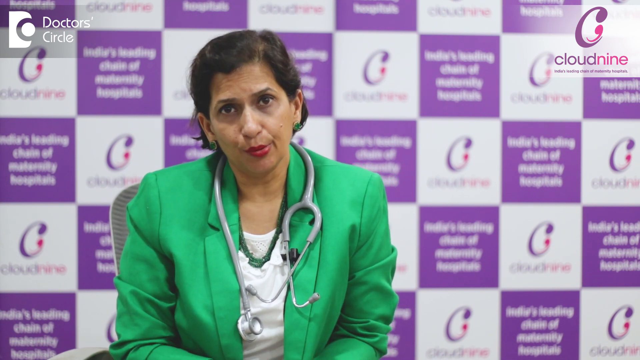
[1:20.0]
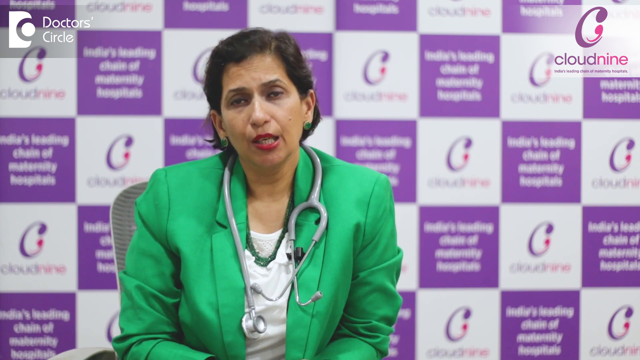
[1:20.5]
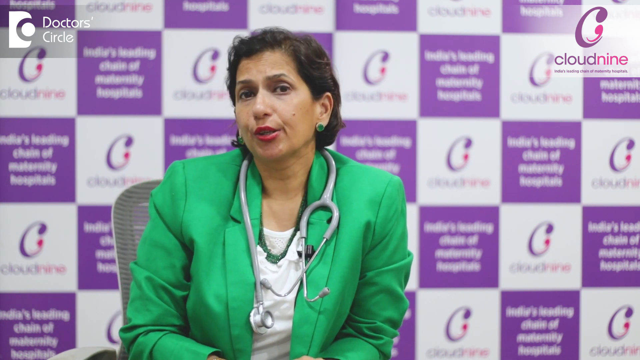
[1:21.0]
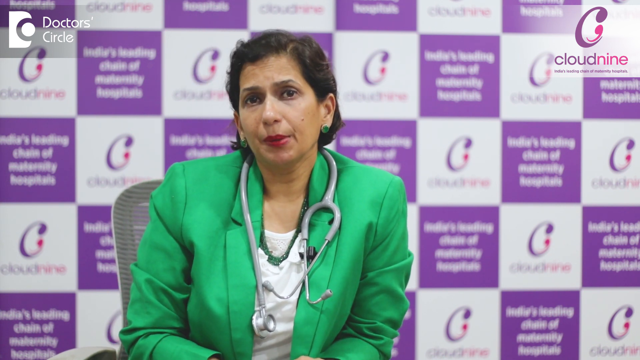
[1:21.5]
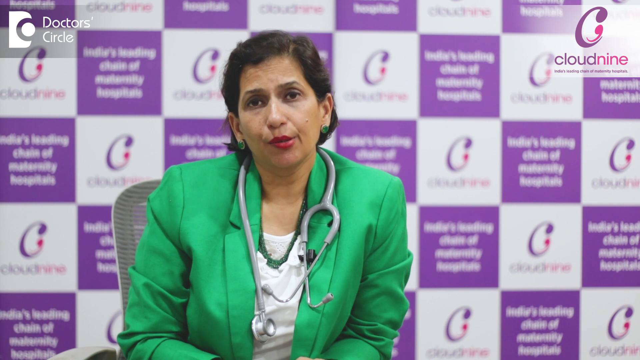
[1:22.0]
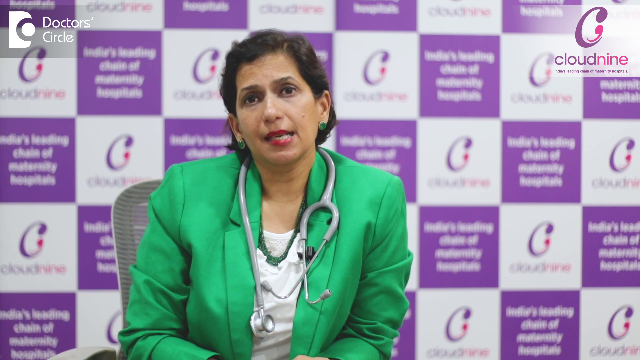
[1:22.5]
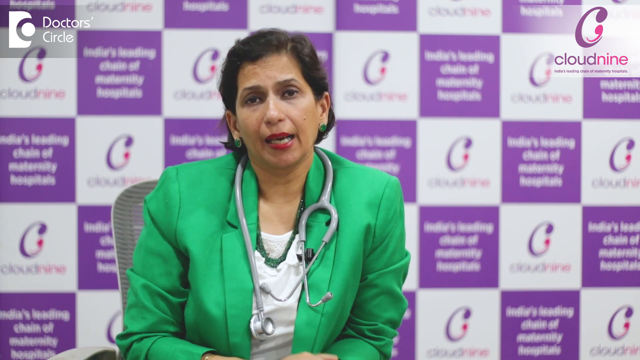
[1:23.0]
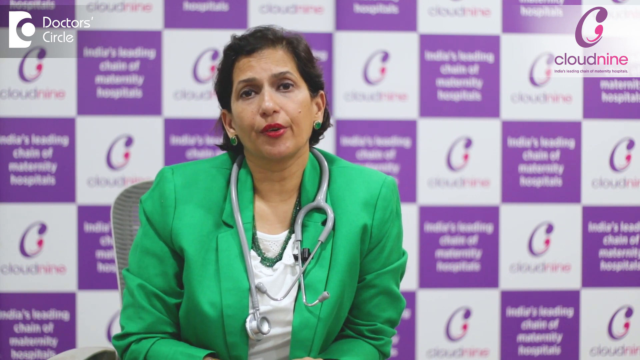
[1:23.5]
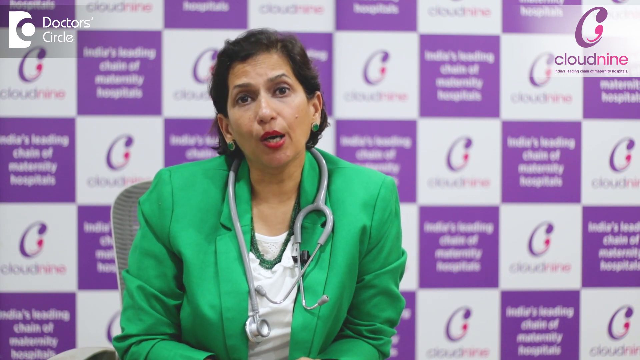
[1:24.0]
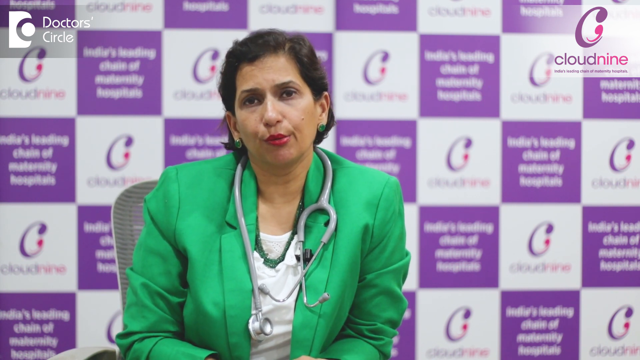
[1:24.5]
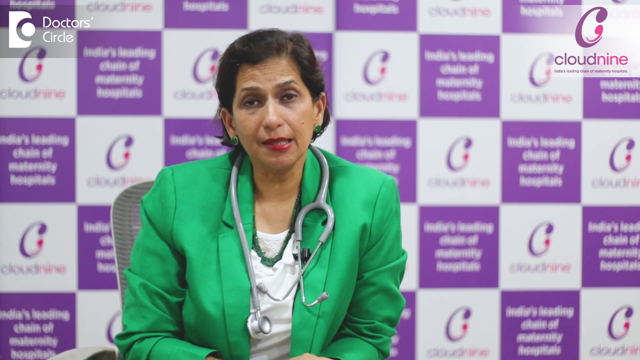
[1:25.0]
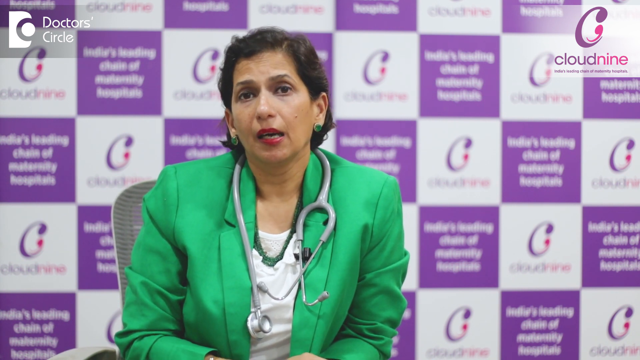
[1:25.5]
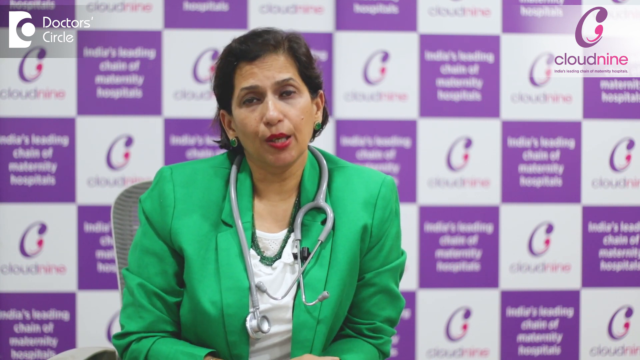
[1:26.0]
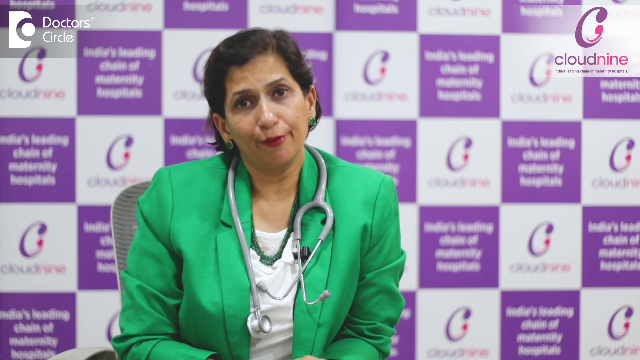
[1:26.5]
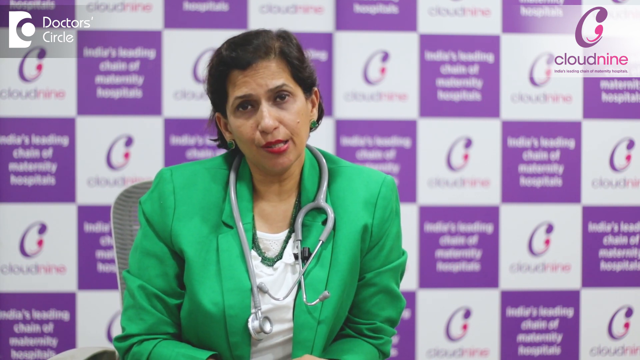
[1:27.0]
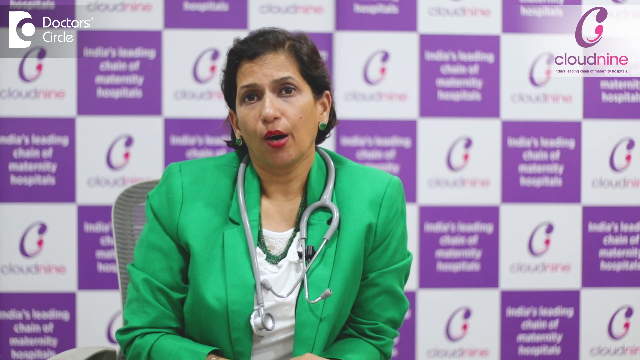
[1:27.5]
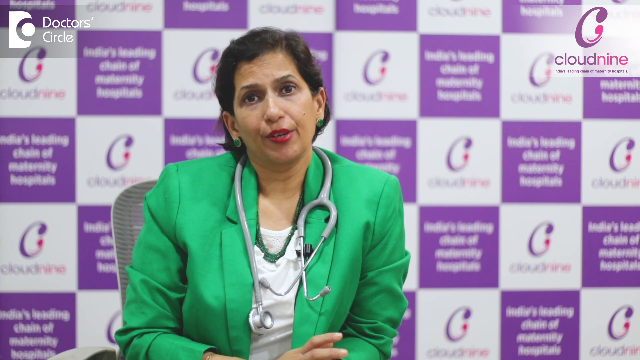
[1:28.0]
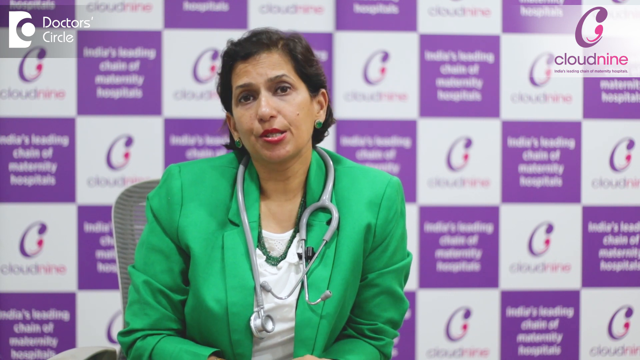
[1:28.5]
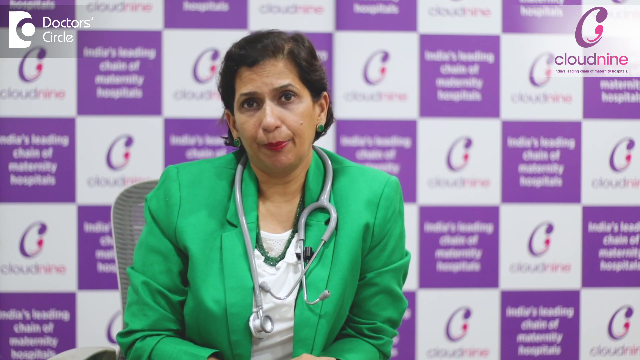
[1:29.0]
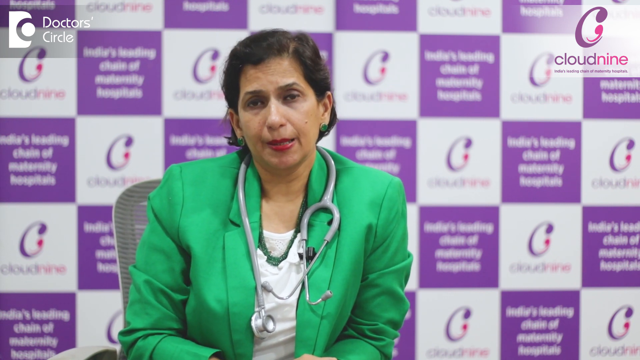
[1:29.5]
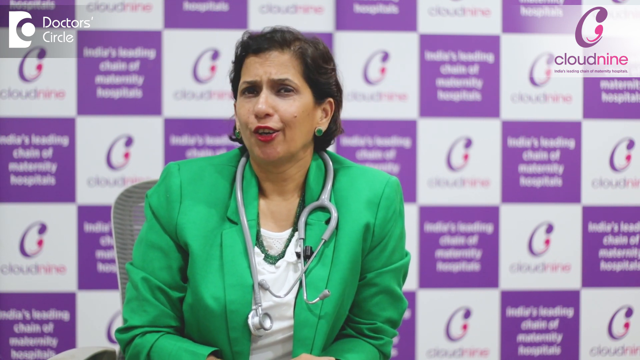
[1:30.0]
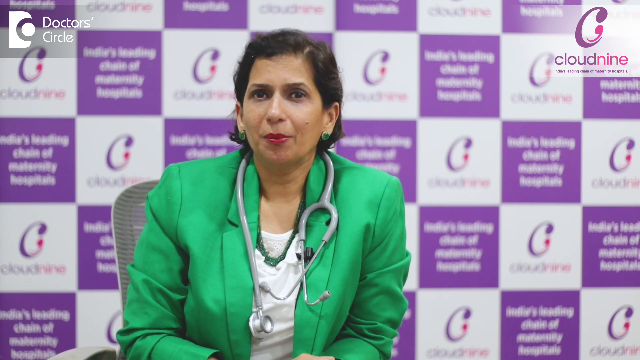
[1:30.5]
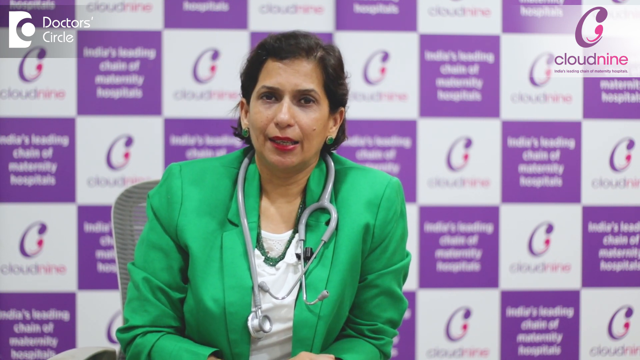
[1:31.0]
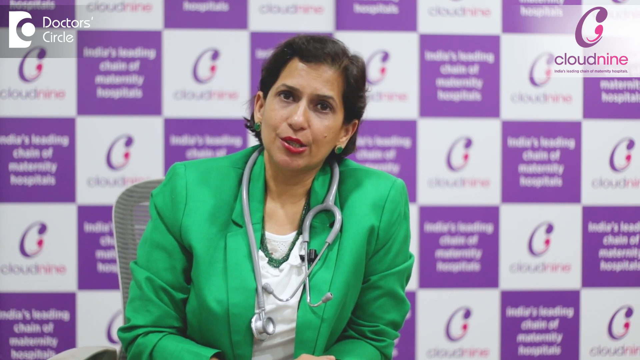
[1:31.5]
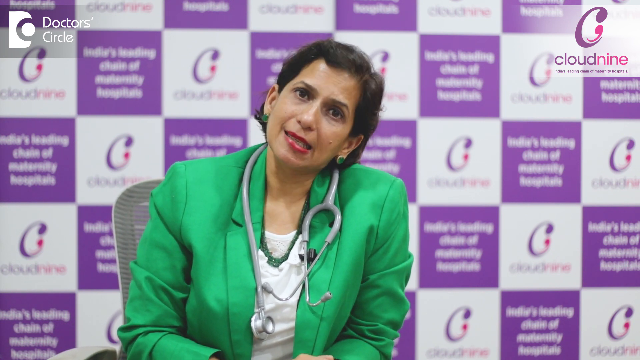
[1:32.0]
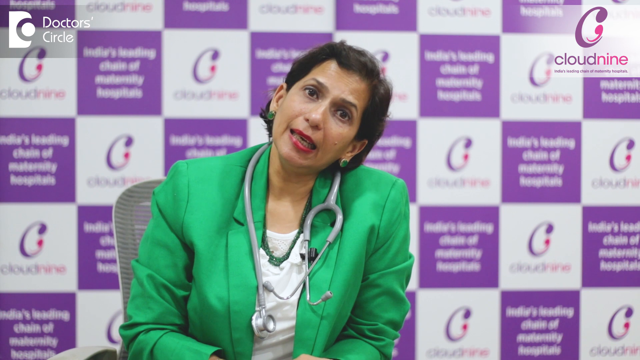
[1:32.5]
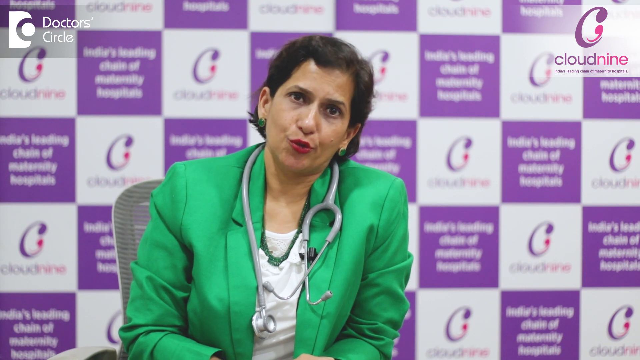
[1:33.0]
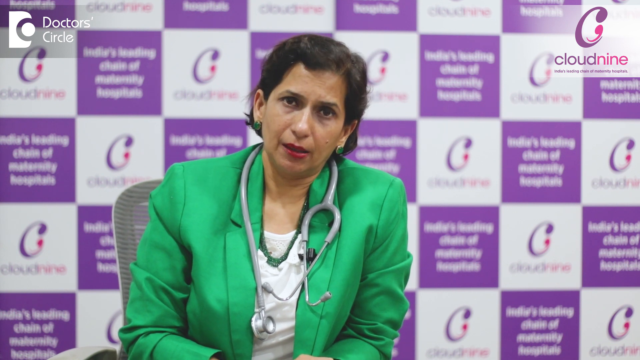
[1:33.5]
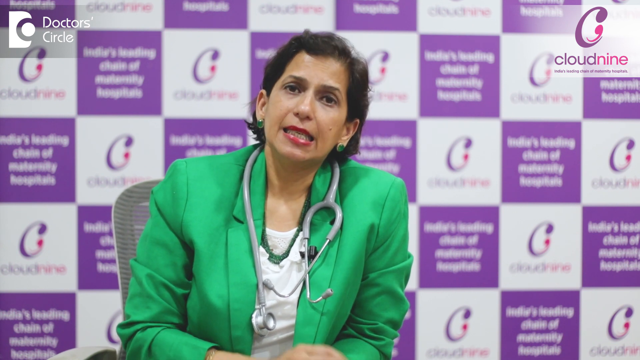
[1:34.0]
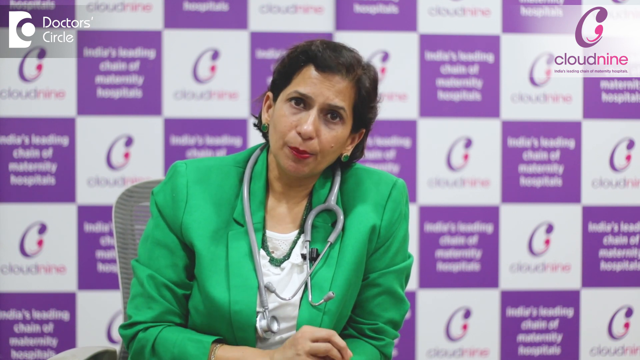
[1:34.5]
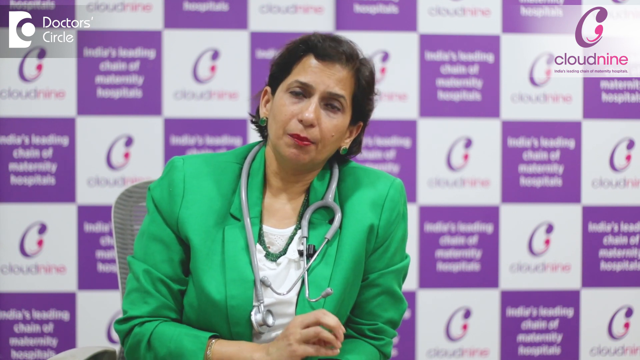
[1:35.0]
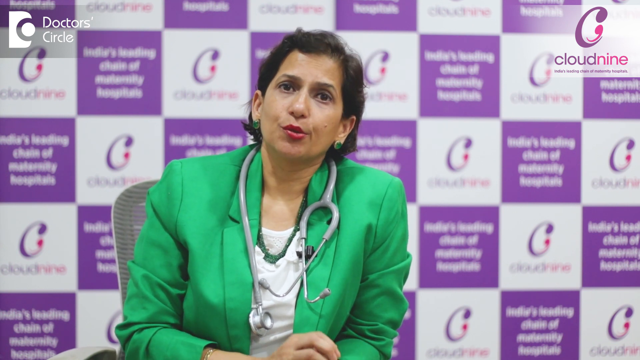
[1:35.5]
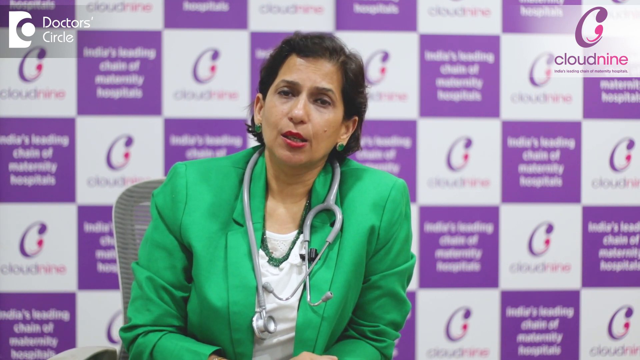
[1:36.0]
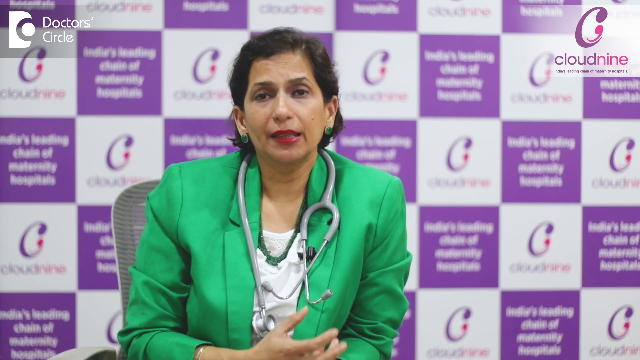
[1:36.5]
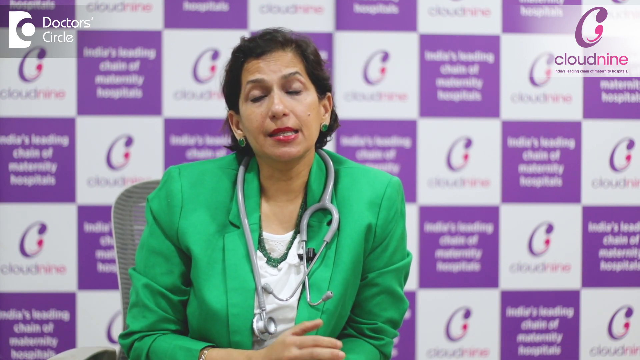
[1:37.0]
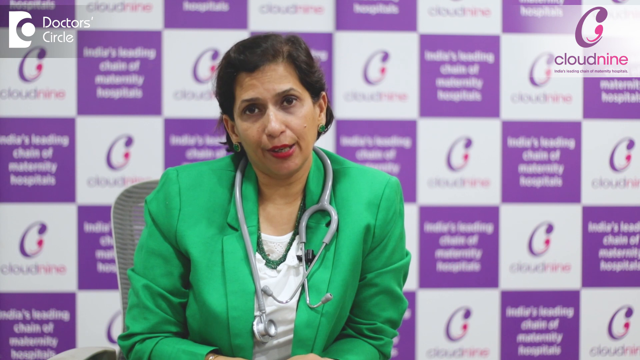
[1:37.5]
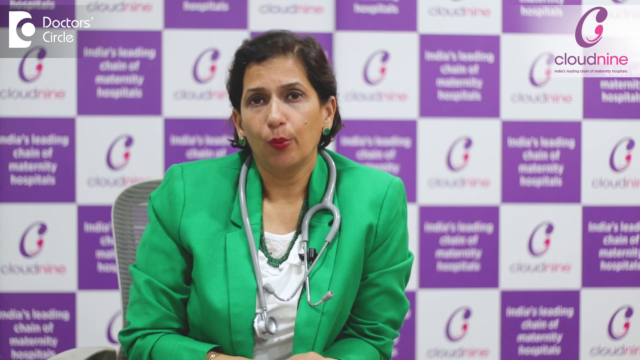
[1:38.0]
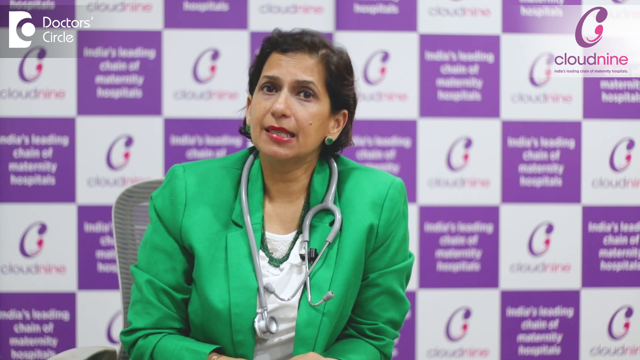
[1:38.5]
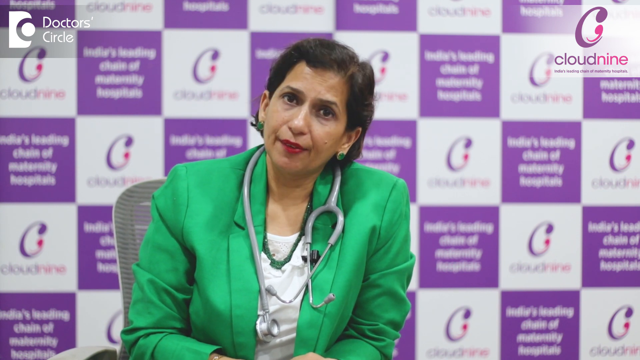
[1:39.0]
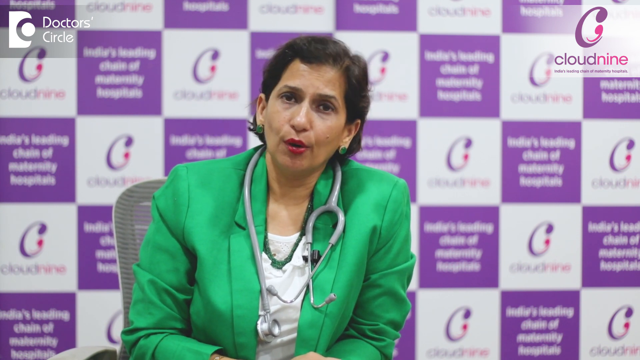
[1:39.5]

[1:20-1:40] A woman in a green jacket with a stethoscope around her neck talks to the camera. Her shoulders lean to the left in a fixed position with her body weight that way, and she looks like her left elbow is leaning on a desk slightly in front of her. Her head is tilted or even turned slightly to her right, so her left cheek and the left side of her face are more prominent; the green earring in her left ear is clear while her right ear is almost hidden. She nods her head forward and her right ear comes more into frame. She keeps nodding forward as she talks, then her head tilts slightly to the left and the green earring on her right earlobe becomes more visible. Her head then moves left and right in an almost horizontal movement, she nods a little, and then her head tilts to the left as her whole body weight seems to go left. Her right hand briefly appears from the bottom of the frame, and her head straightens before tilting left and then right.